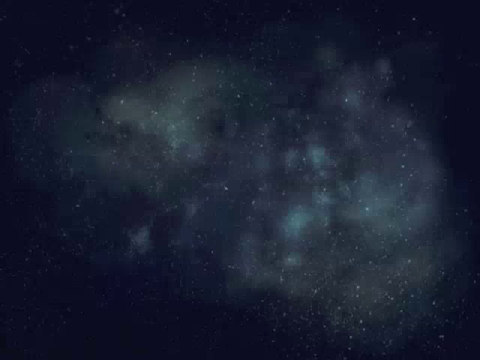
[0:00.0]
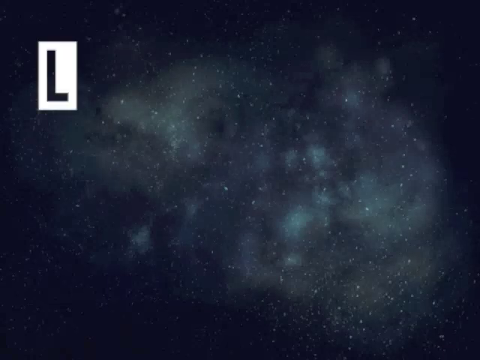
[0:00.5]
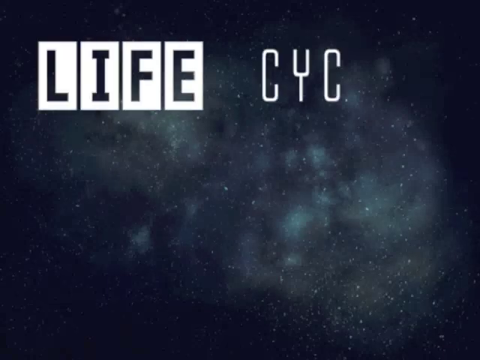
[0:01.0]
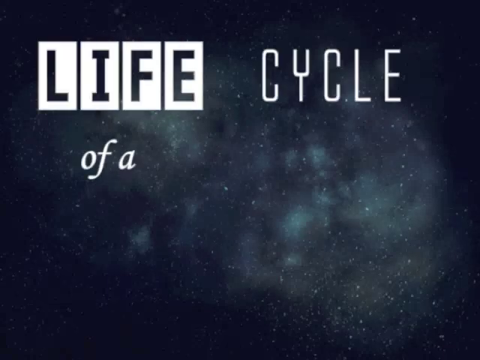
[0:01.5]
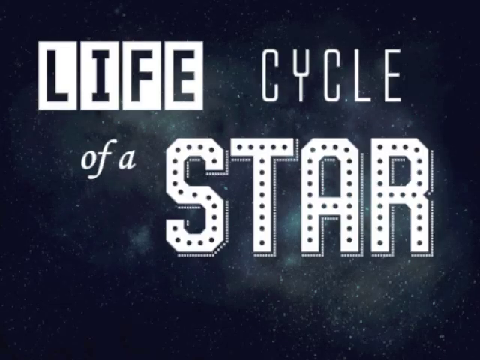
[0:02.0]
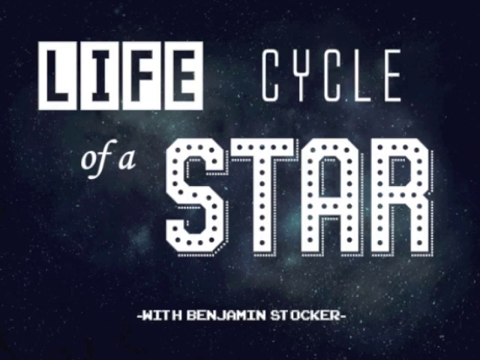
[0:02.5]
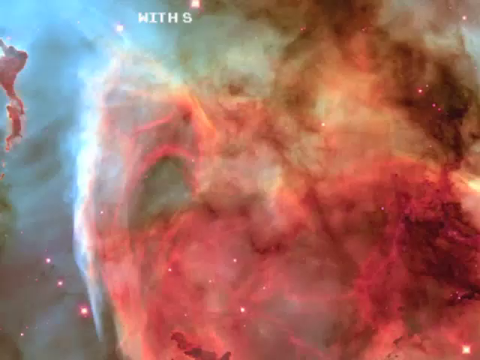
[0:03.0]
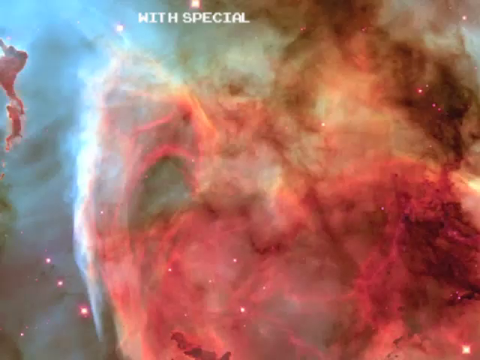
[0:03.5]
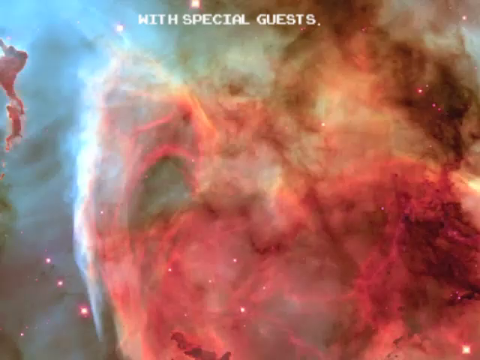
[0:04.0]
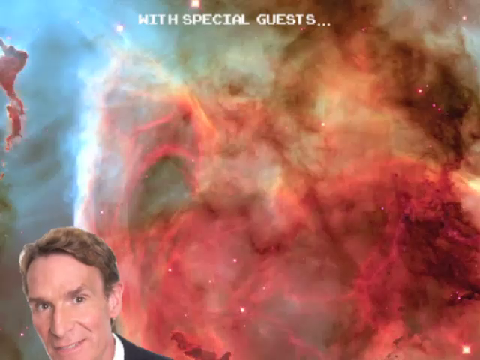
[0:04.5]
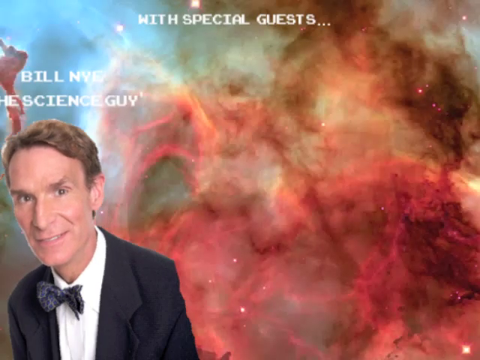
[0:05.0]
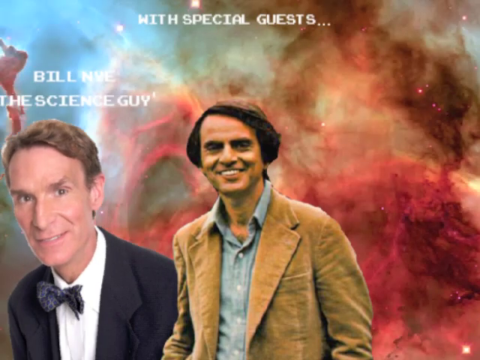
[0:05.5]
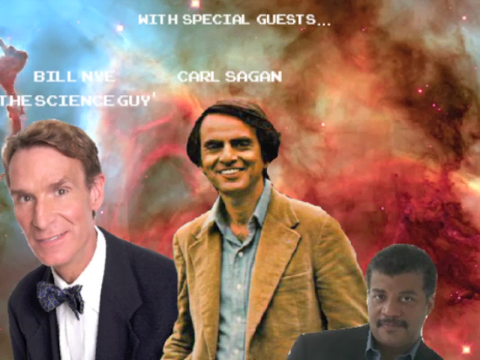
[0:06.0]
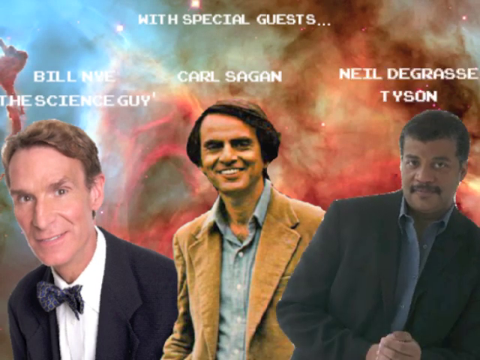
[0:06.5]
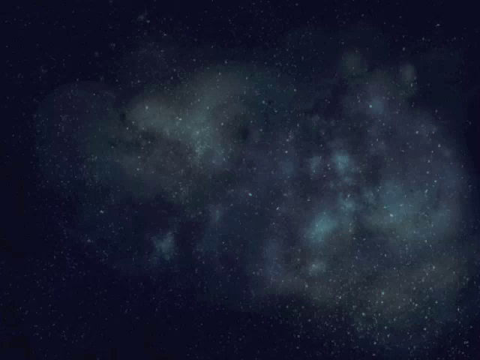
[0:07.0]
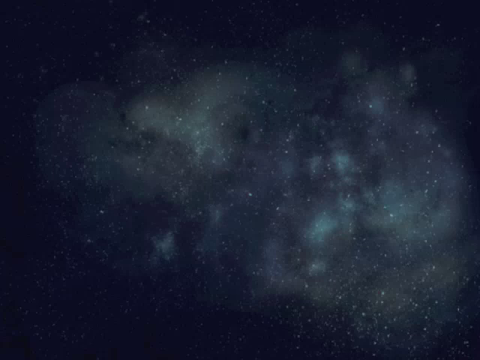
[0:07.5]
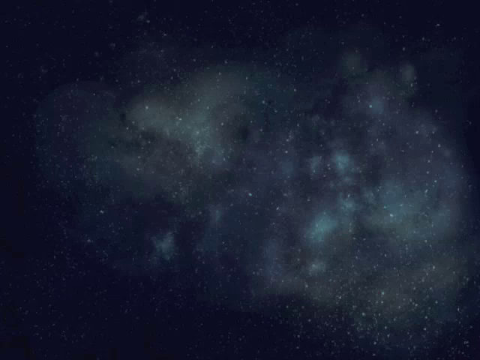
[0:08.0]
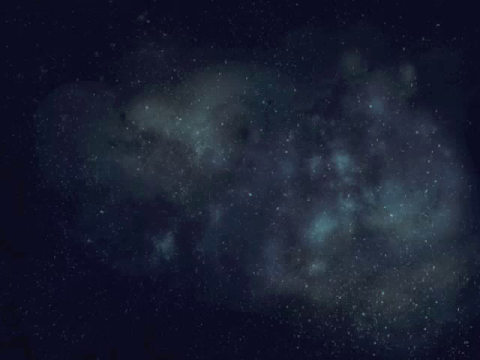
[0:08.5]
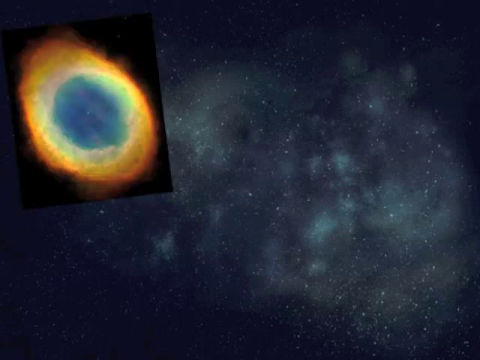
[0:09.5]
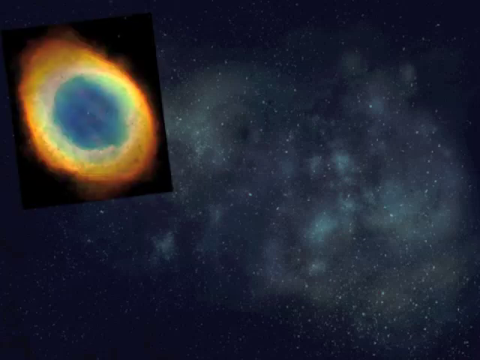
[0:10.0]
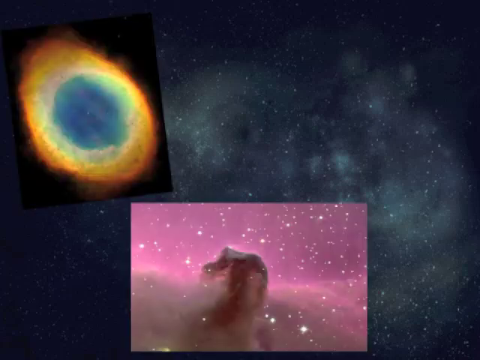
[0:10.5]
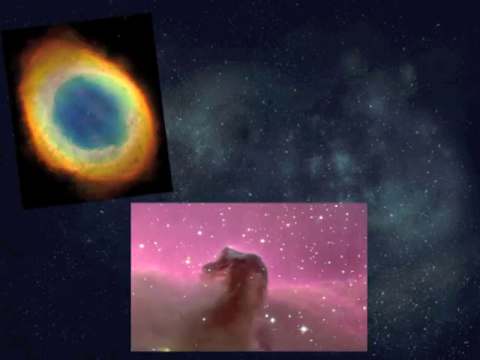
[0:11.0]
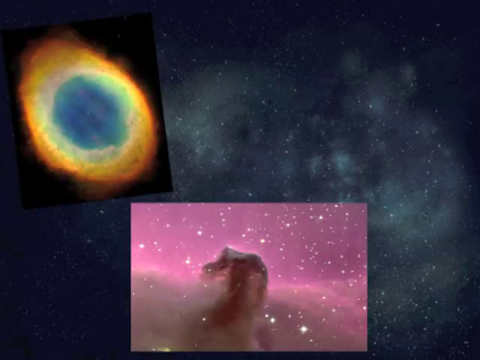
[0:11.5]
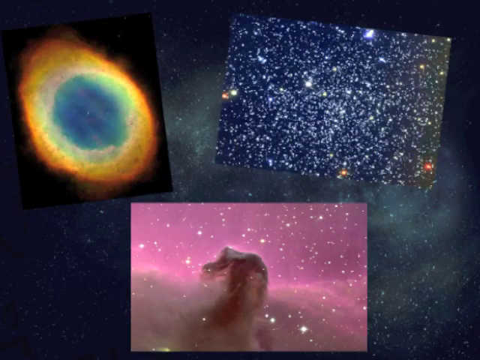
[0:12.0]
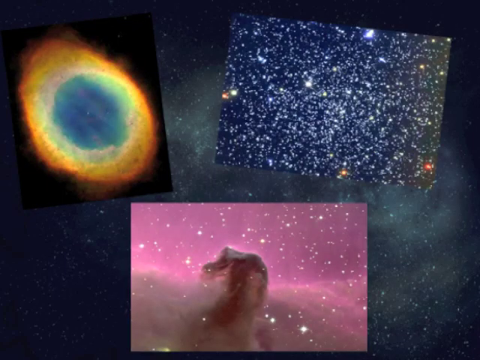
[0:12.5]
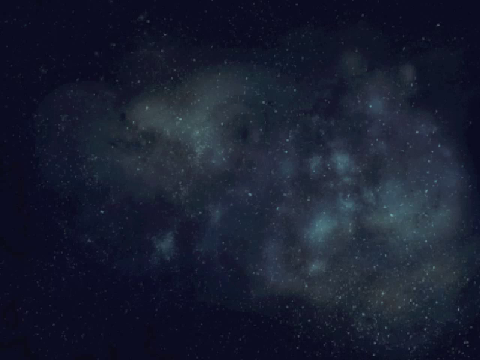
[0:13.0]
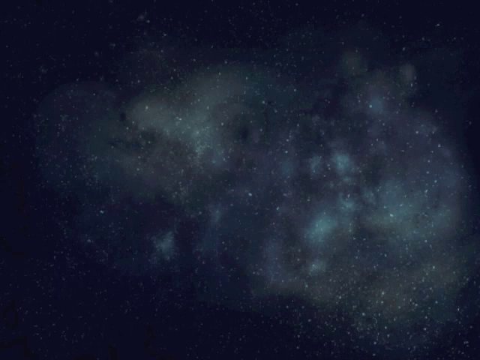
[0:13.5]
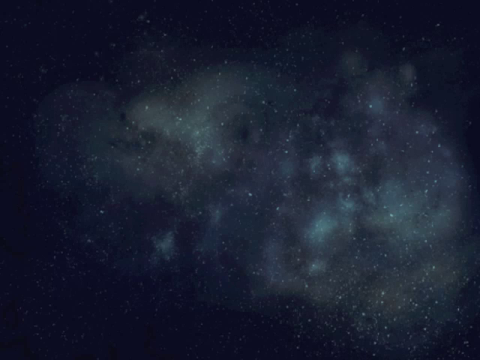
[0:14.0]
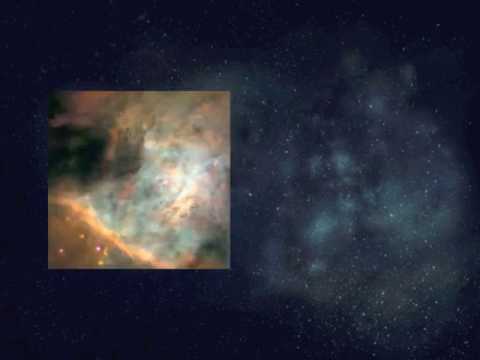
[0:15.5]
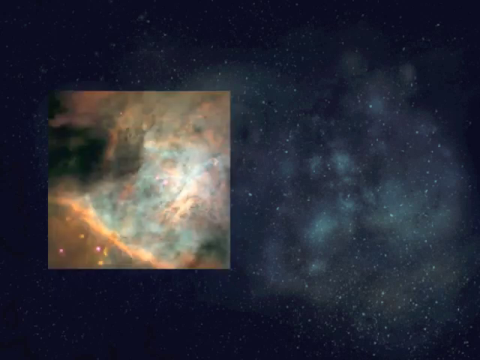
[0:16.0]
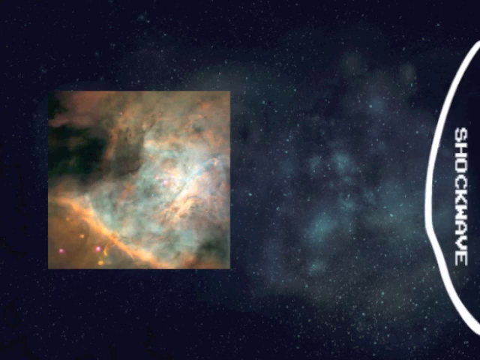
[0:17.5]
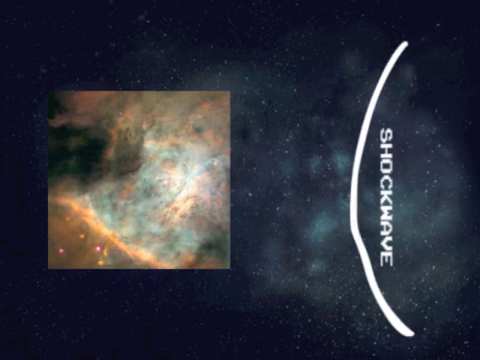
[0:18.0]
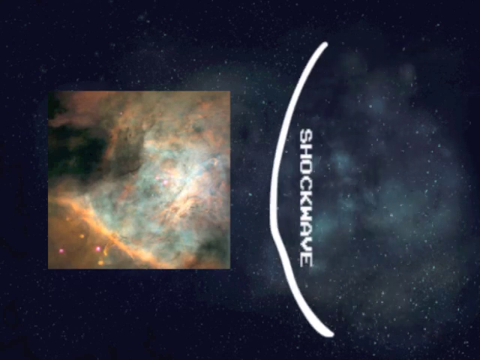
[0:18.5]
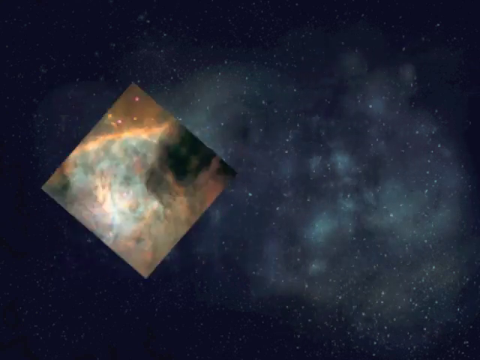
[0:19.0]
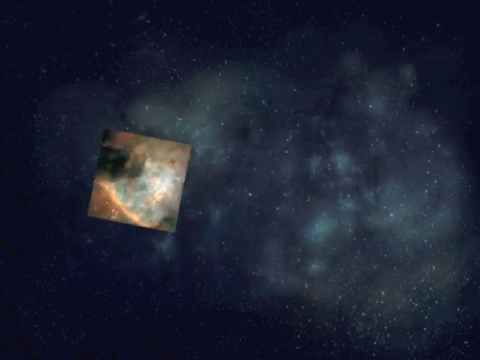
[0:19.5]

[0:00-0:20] A dark galaxy fills the background: the borders are black, shading into dark navy blue, with a white mist that looks like clouds. On the left side, text reads "life cycle" and "of a star," with "star" as the biggest word. It then says "with Benjamin Stocker" and "with special guests...", listing Bill Nye the Science Guy, Carl Sagan and Neil Degrasse Tyson. Images of the guests appear, and button-down collar shirts are visible. Images of different things then come up. One is like an oval whose colours go from orange to yellow to greenish to blue. In the upper left-hand corner and, next to it, the upper right-hand corner there is a bunch of bright dots, some brighter than others, possibly stars. At the bottom there are purple stars with some type of mass in the middle, though this is unclear. Another image appears that looks like a shockwave.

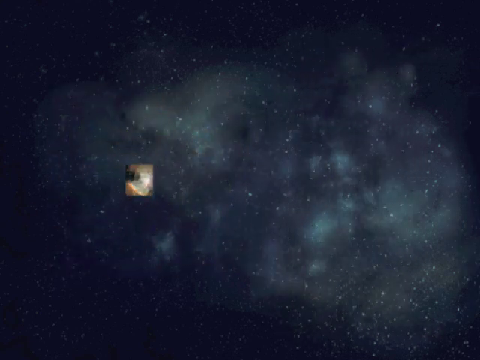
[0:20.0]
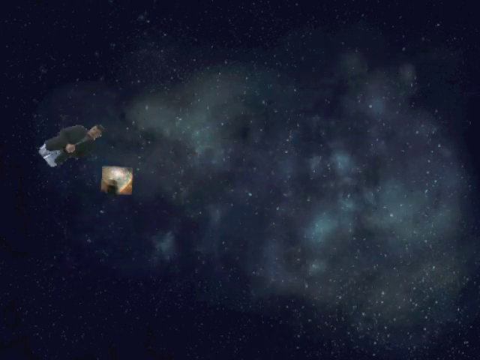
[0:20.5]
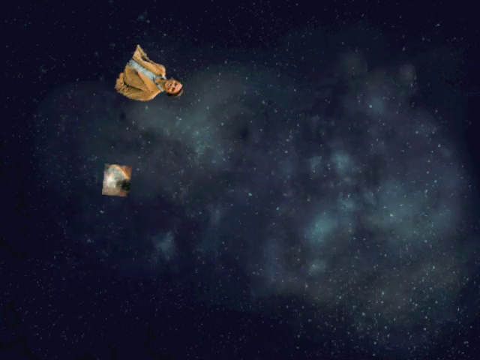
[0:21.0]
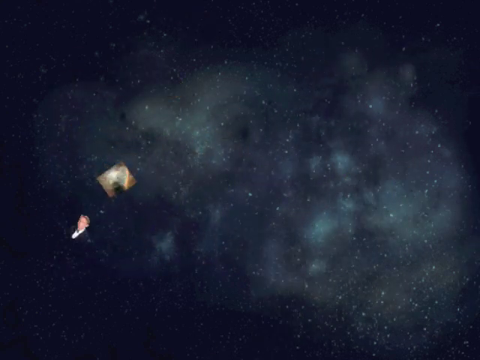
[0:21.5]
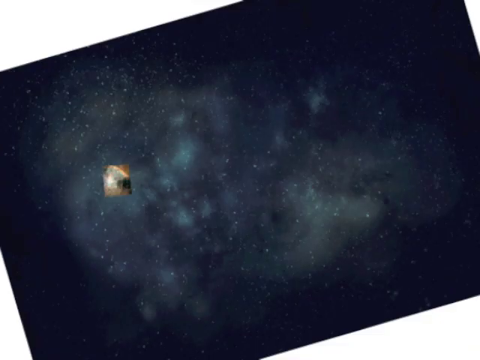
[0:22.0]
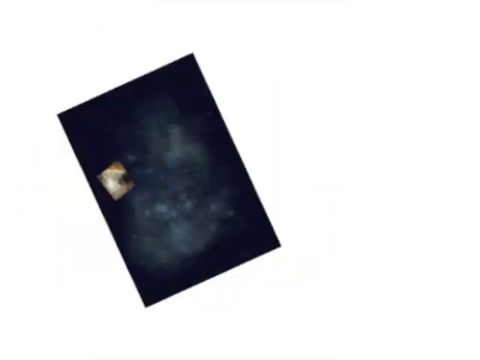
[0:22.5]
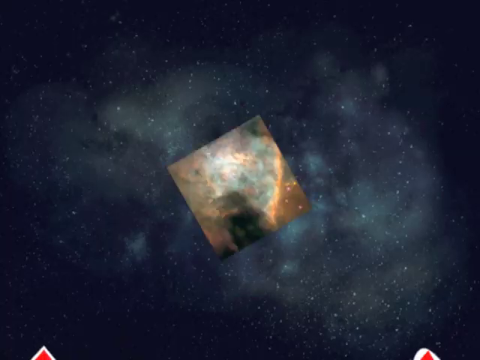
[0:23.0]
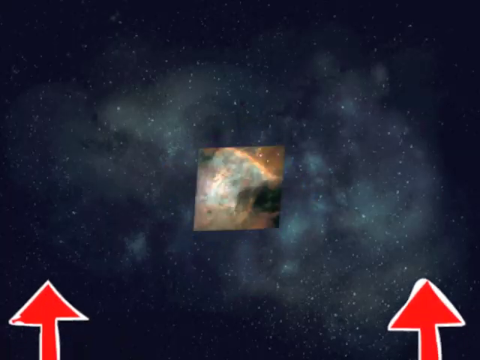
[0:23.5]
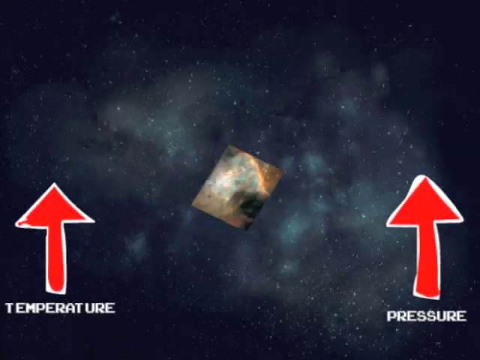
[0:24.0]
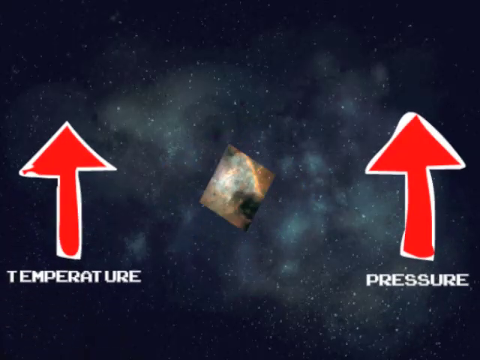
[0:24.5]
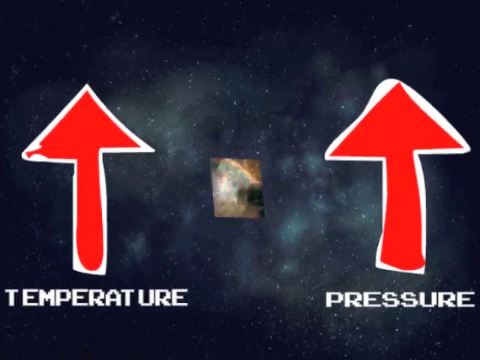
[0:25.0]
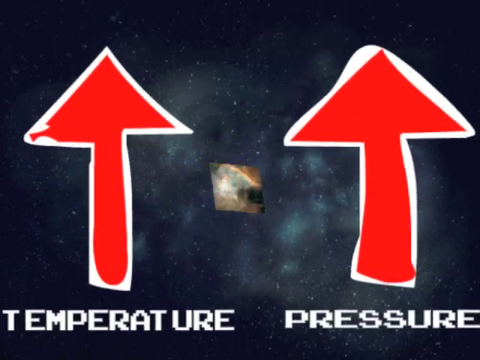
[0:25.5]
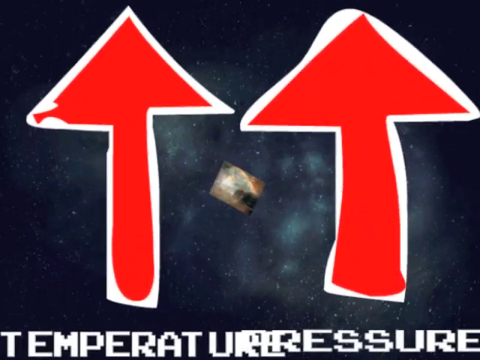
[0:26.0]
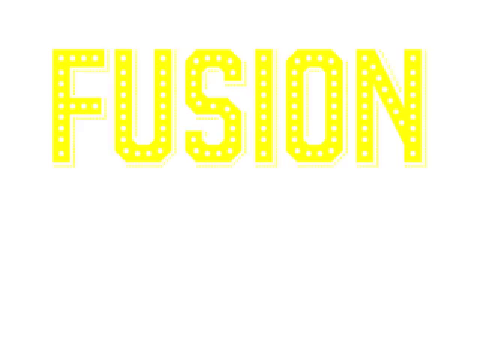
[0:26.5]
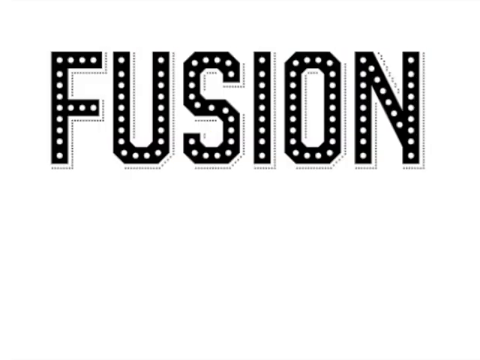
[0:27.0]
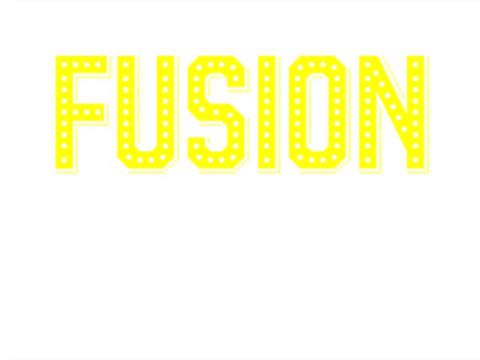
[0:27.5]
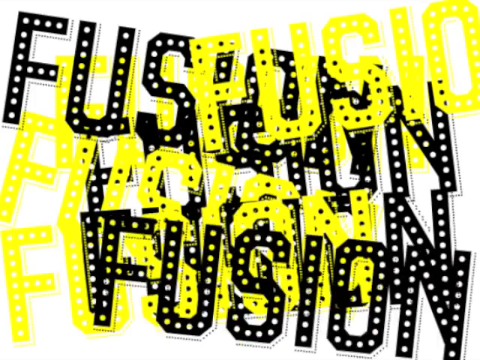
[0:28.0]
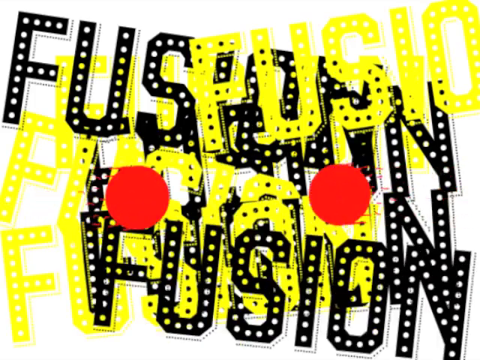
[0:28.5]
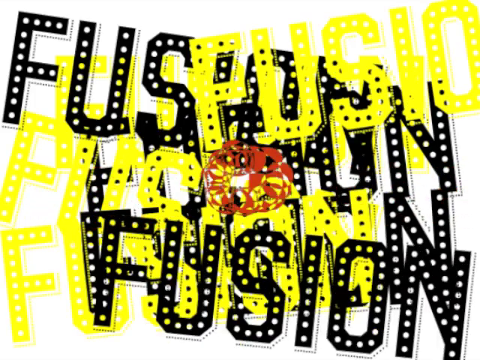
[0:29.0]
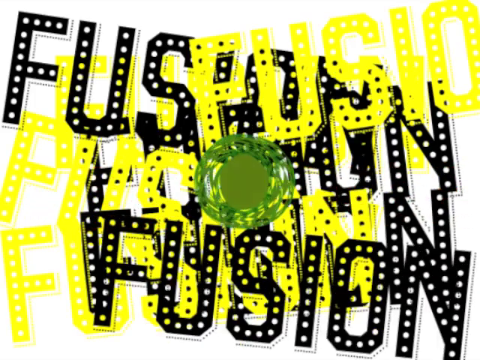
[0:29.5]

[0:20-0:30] A picture gets smaller and smaller against the same background. The three guests, including Neil Degrasse Tyson and Bill Nye the Science Guy, appear. Everything spins, and two arrows coloured red, yellow and white go up; the left one says "temperature" and the right one says "pressure." They get closer and closer and then disappear, possibly exploding, in a flash of bright white background. In mostly black letters, with circles going throughout, the word "fusion" appears in white. It blinks and turns yellow, and the word then appears everywhere in yellow and black, with a green circle in the middle.